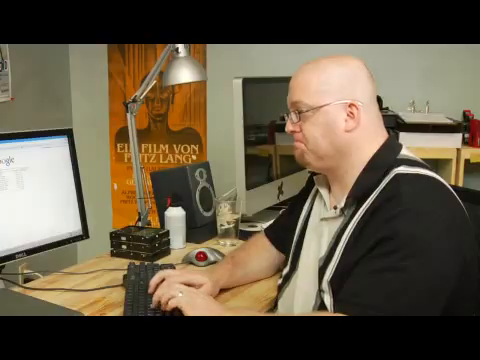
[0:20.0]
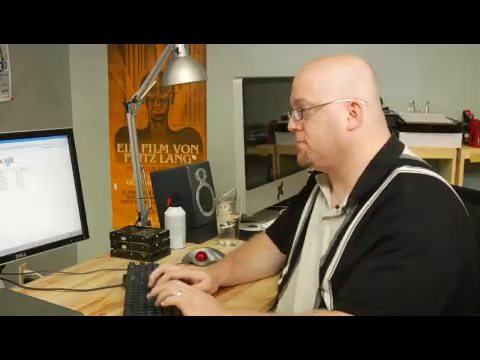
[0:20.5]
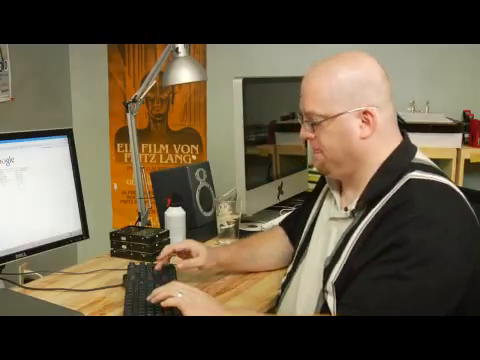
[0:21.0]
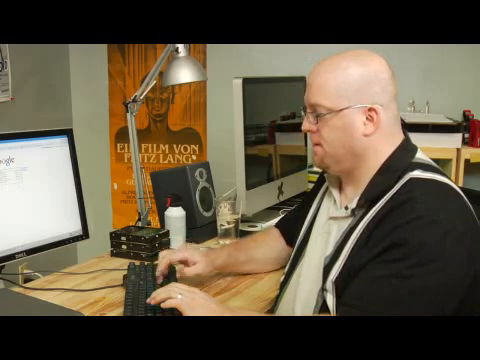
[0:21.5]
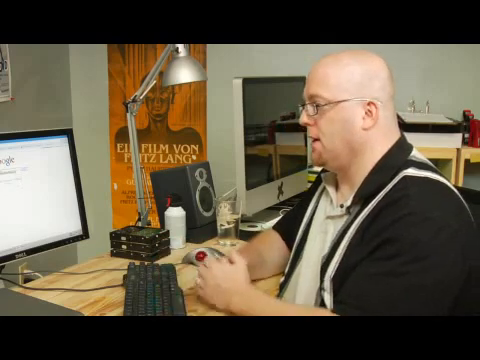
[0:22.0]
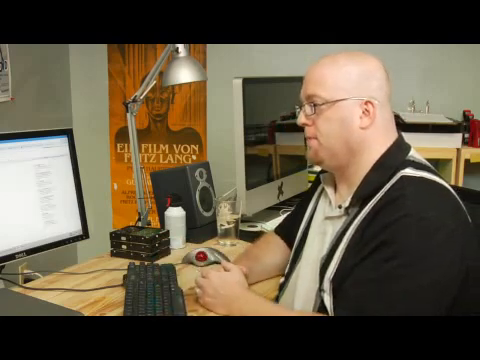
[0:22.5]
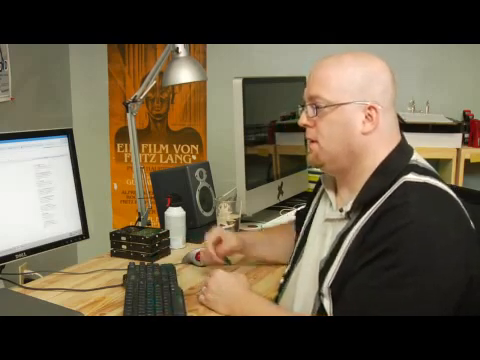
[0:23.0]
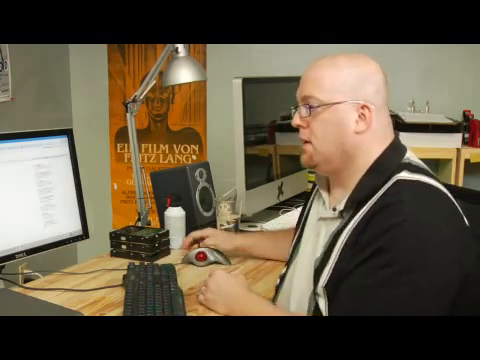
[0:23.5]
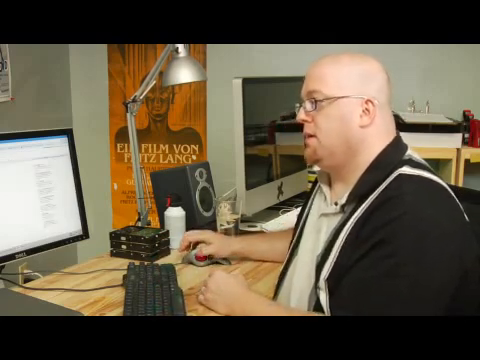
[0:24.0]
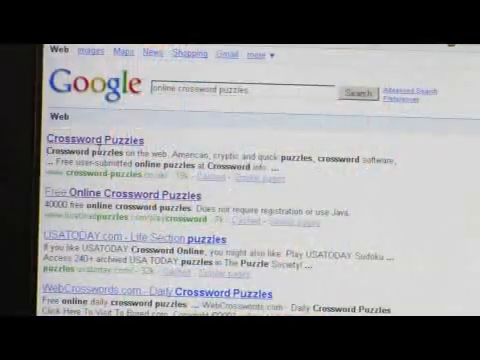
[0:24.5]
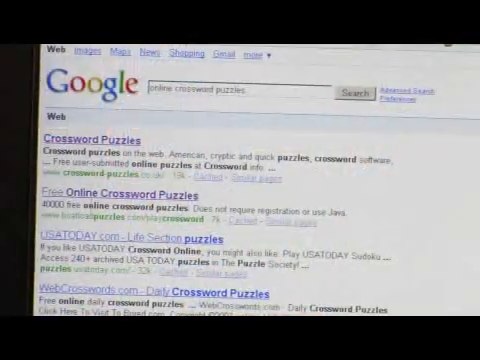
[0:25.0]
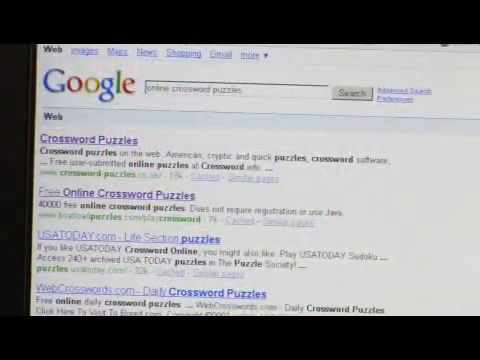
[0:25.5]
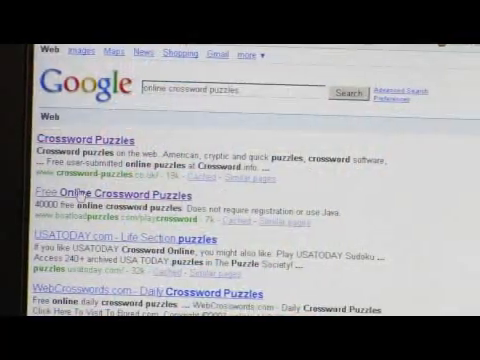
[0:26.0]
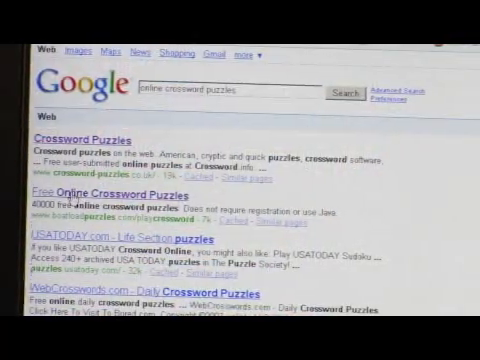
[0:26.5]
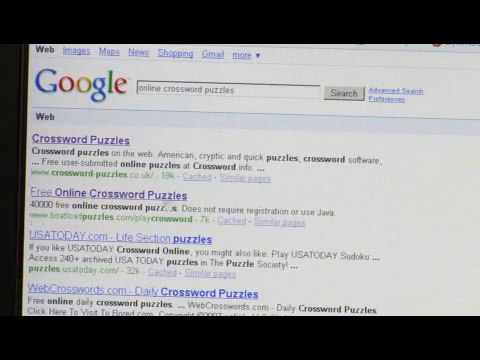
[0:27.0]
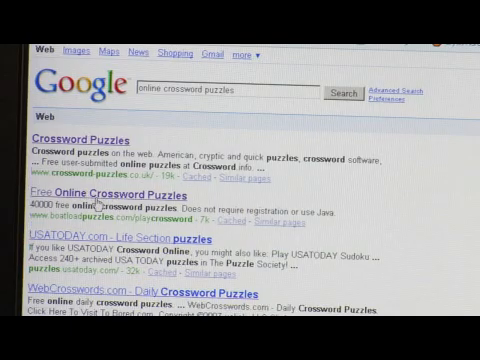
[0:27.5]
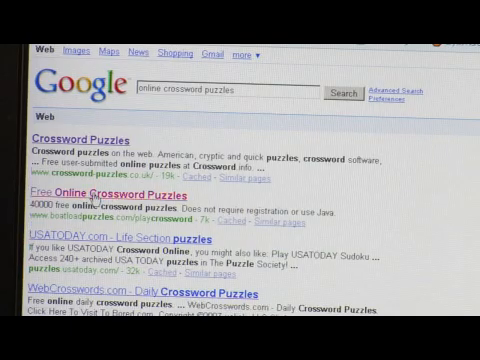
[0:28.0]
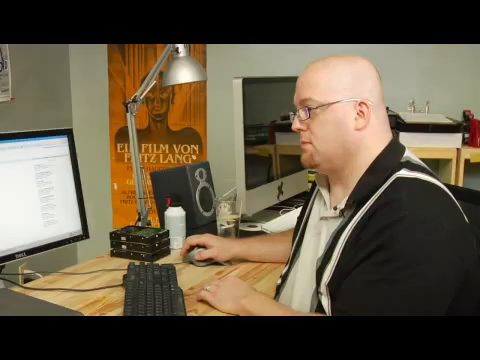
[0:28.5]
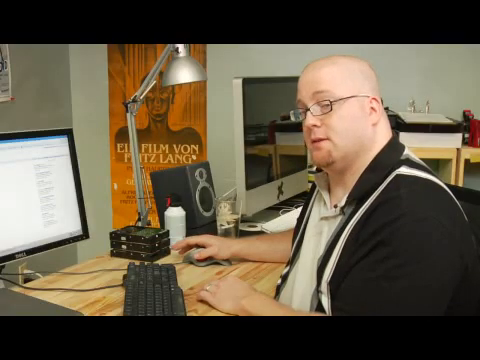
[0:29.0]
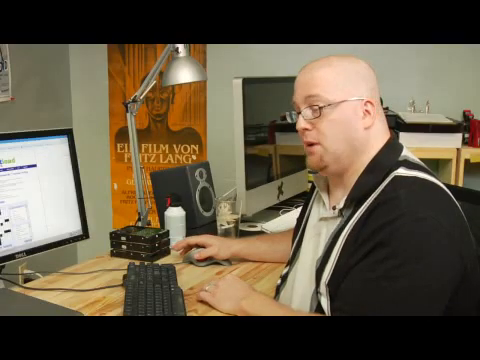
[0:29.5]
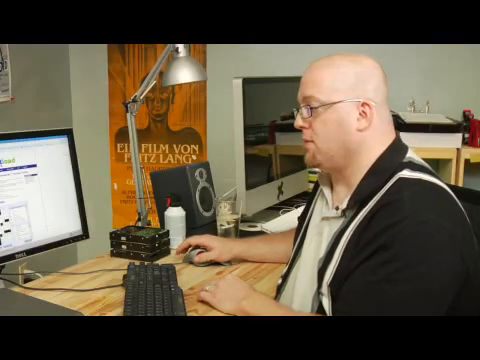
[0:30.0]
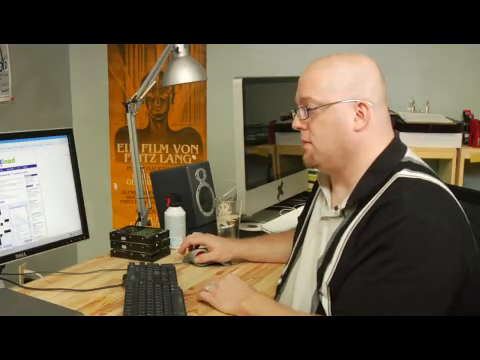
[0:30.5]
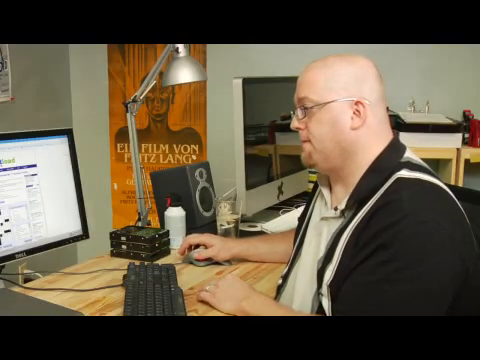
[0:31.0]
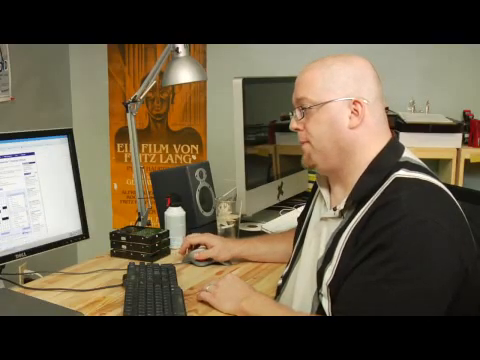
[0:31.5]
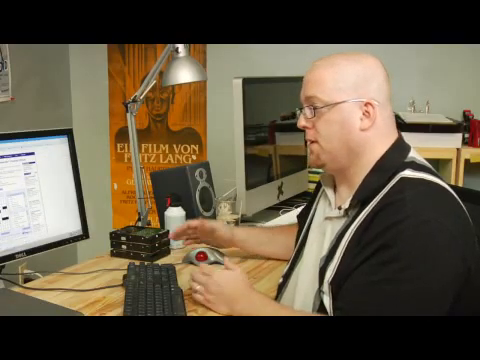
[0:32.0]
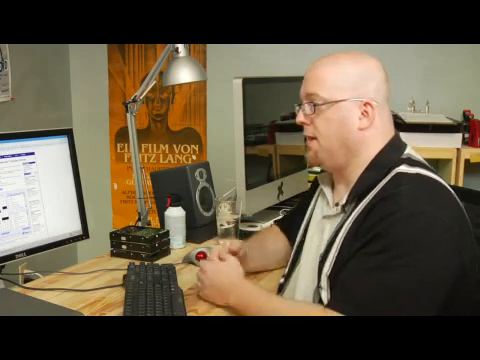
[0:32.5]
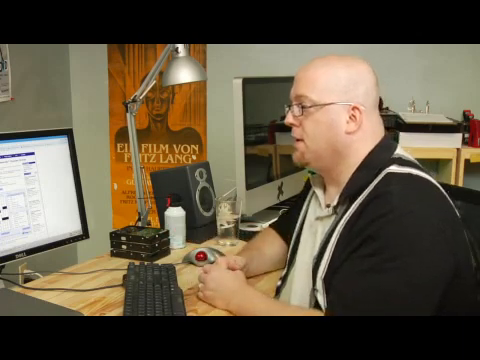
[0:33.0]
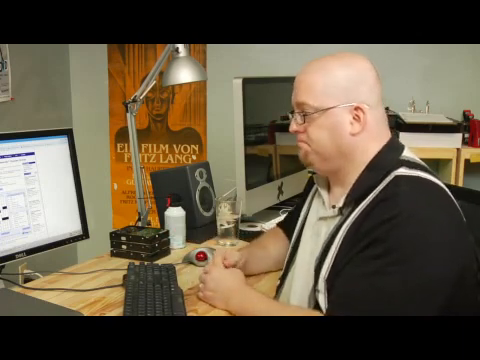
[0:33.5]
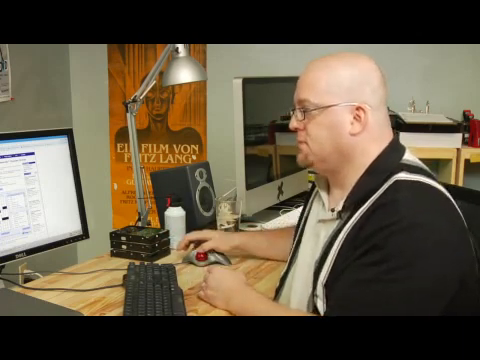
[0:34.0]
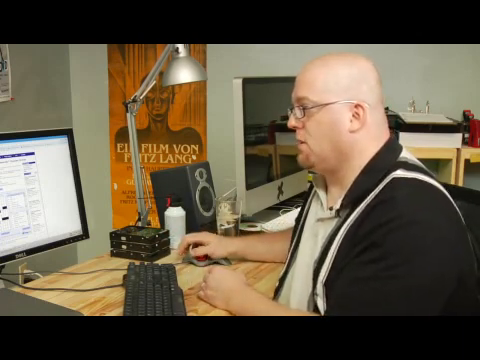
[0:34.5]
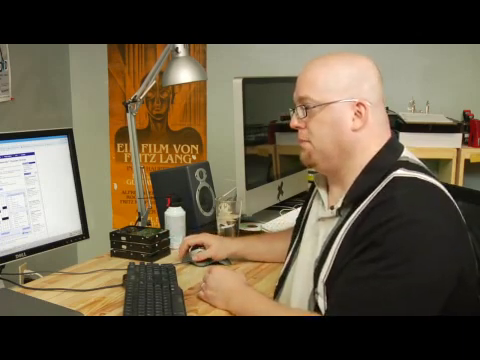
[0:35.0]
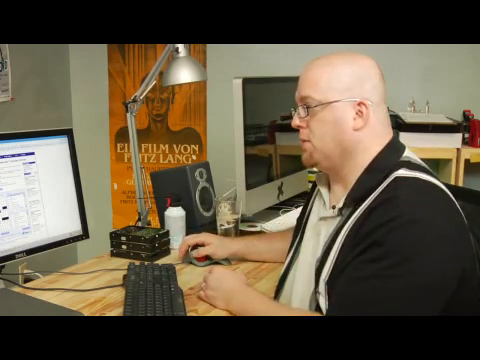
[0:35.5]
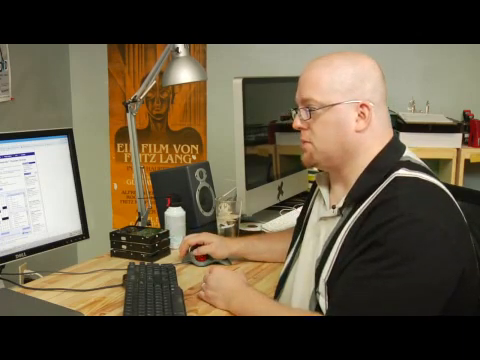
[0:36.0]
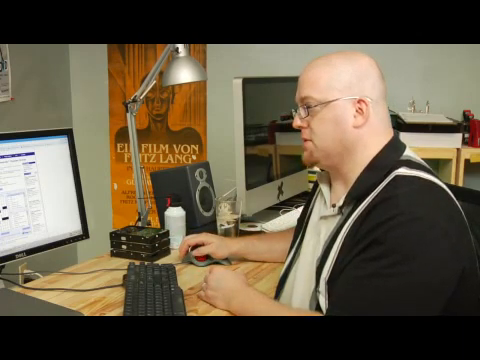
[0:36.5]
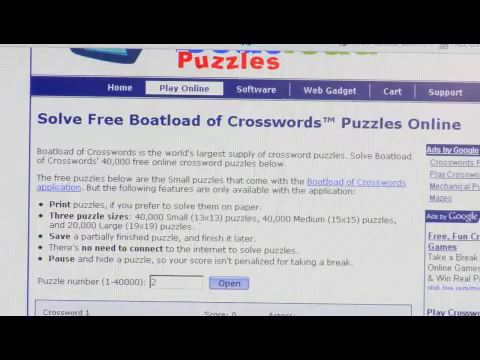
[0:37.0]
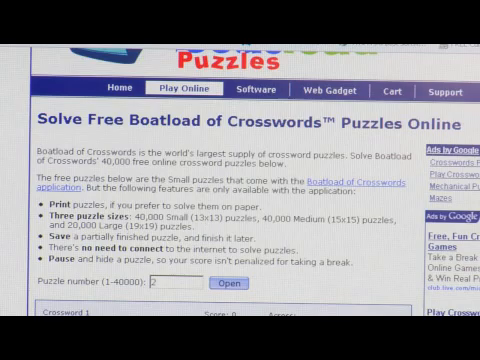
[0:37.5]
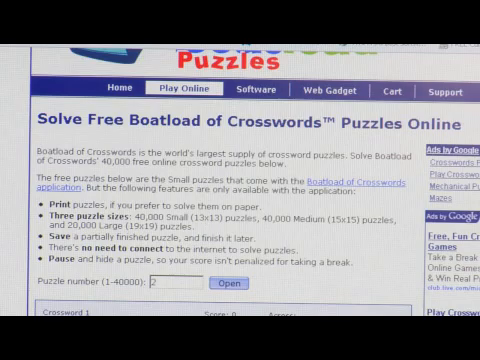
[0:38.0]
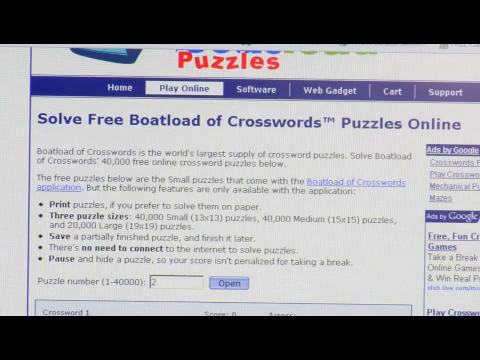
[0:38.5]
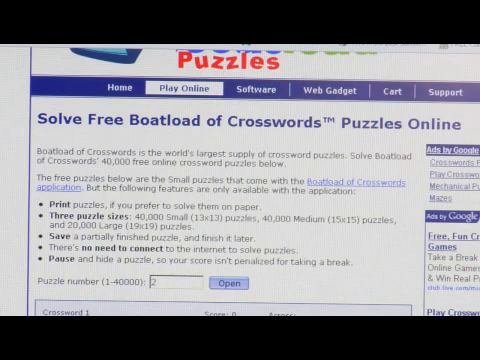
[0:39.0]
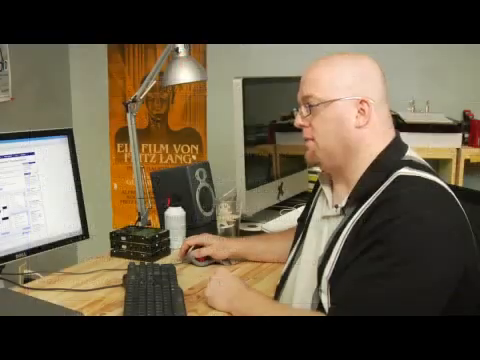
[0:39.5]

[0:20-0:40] A man types at a wooden desk. He stops typing, presses enter and looks at the Google search results for what he typed in, "online crossword puzzles". Several results appear: "crossword puzzles", then "free online crossword puzzles", "USAtoday.com life section puzzles", and "crosswebcrosswords.com daily crossword puzzles". The first two results are purple, apparently links he has visited before, while the last two visible ones are blue. Along the top are "web", "image", "maps", "news", "shopping", "Gmail" and "more", with the "more" option having an arrow. The Google logo is multicolored: the G is blue, the first O red, the second O yellow, the second G blue, the L green and the E red.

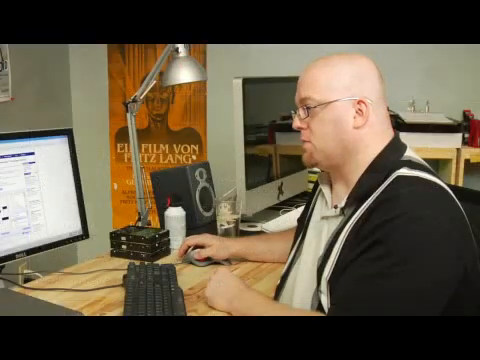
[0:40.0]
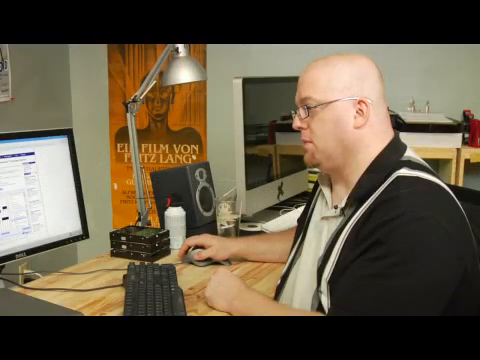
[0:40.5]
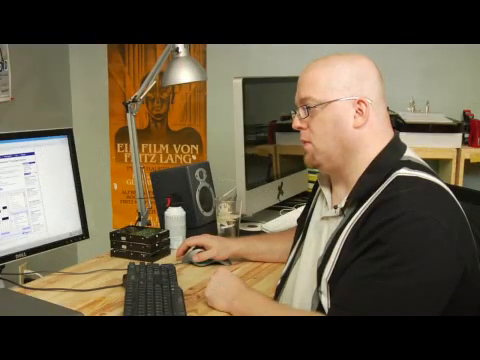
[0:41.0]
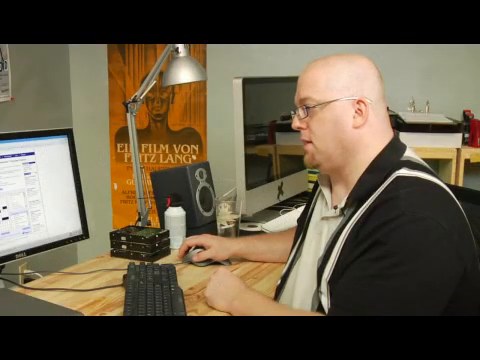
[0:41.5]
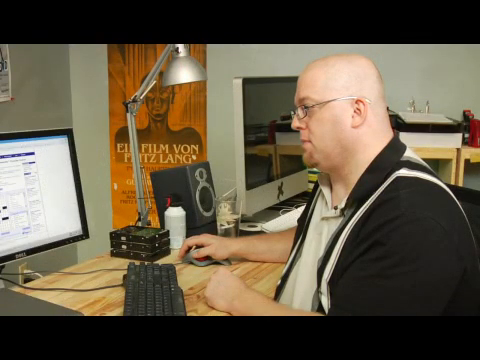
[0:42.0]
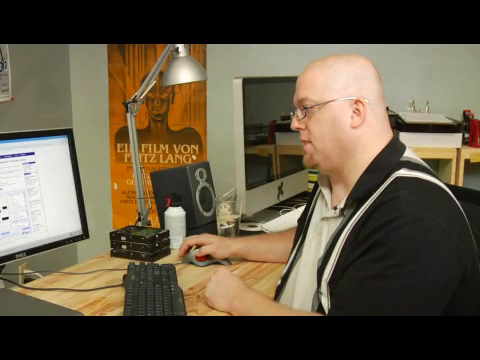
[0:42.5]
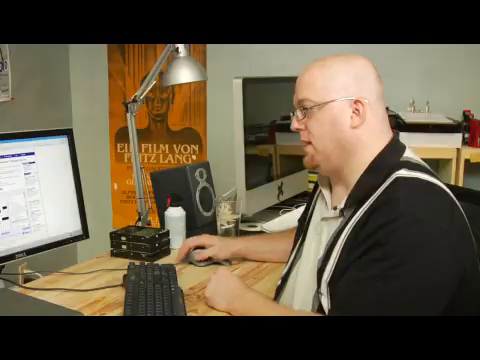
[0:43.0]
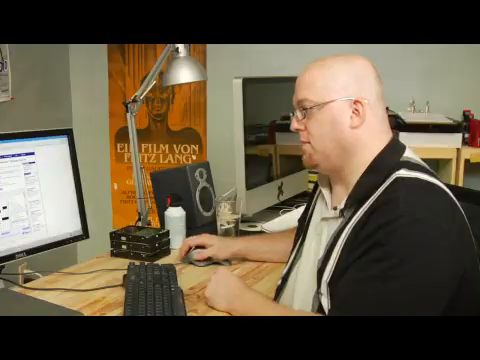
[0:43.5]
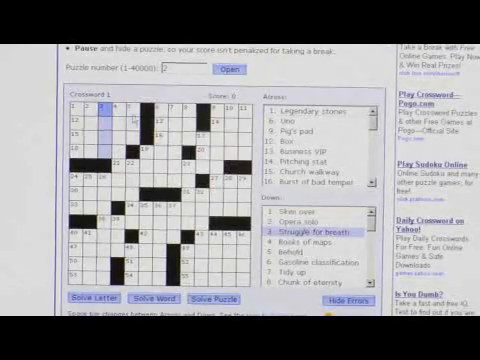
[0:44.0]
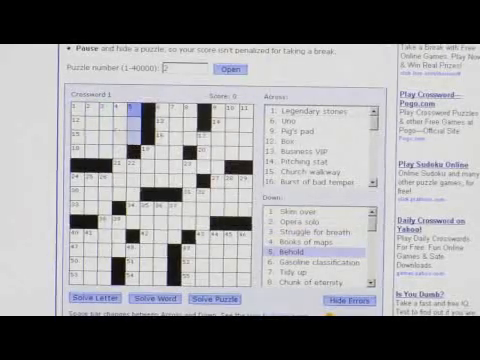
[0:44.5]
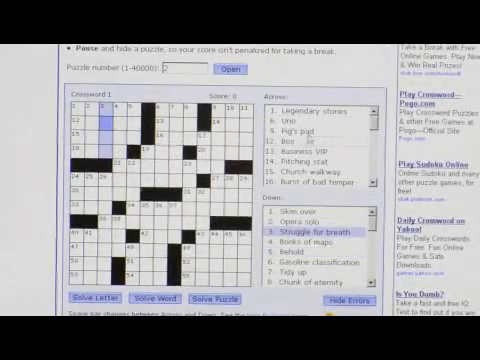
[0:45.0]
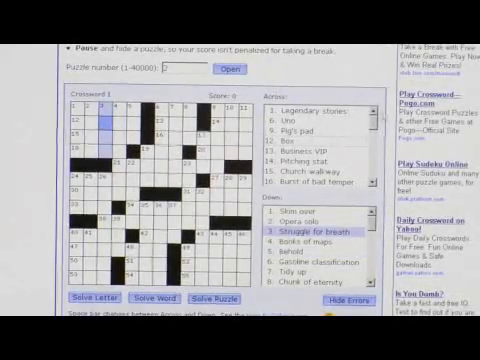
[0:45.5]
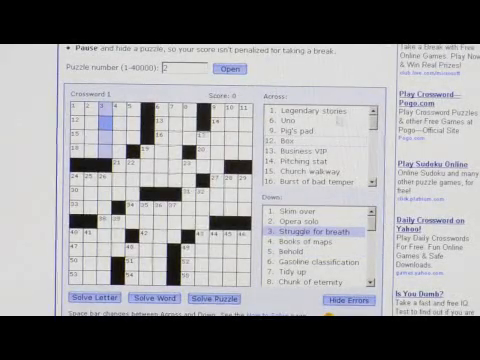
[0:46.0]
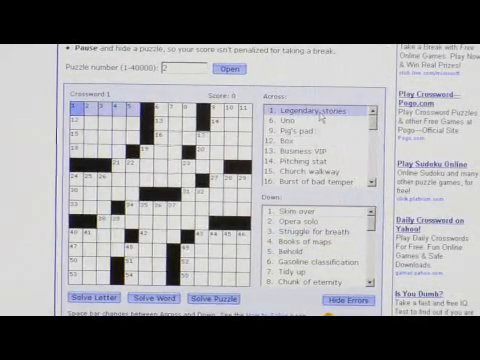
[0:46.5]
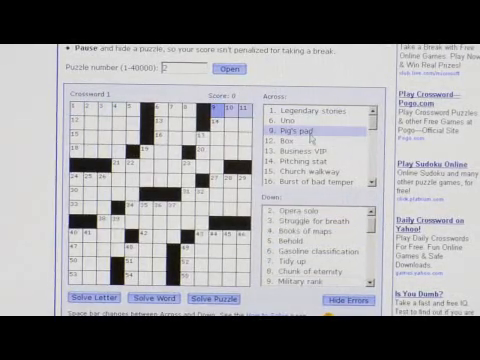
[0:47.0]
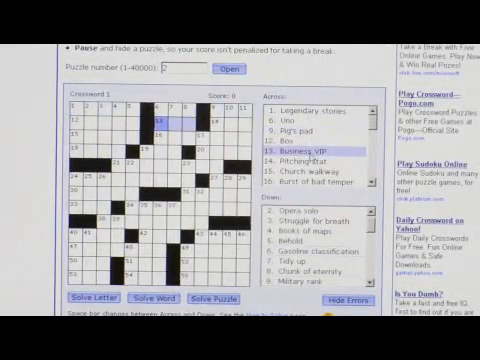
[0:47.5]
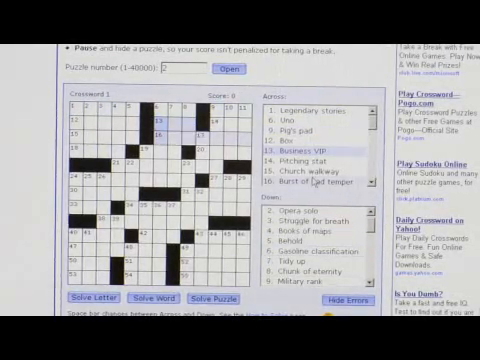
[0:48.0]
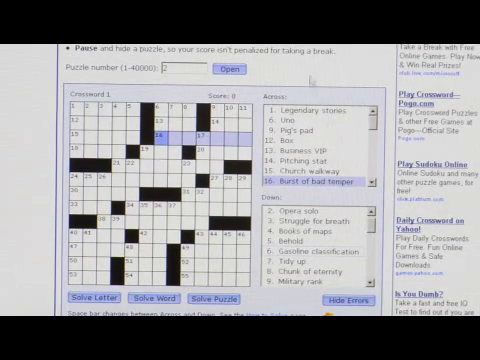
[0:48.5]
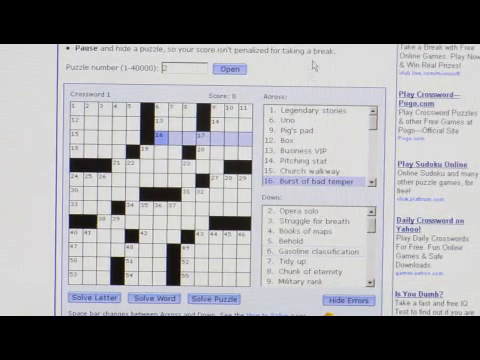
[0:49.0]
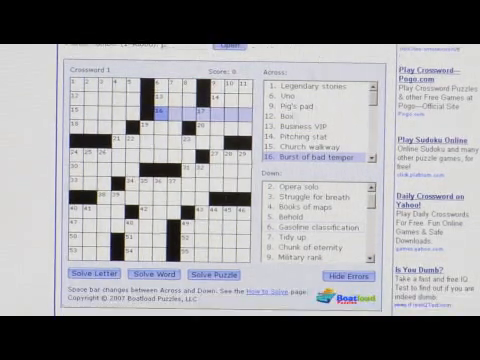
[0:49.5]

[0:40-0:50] A person is doing a crossword puzzle, and the crossword puzzle page shows many elements. At the top is a bullet reading "Pause" in bold black, followed in normal, non-black letters by "can hide a puzzle, so your score isn't penalized for taking a break." Below that is "puzzle numbers" with "1-40000" in quotation marks. To the right is an input box with the number 2 entered, and to its right a blue button reading "open" in black letters. Further right is text reading "Take a break with free online games, play now and win real prizes." Below that there seems to be a blue link too small to make out. Below it is another blue link reading "Play crosswords pogo.com" with "Play crossword puzzles and other free games at Pogo's official site." Below that is a link reading "Play sudoku online", and beneath it, in black, "Online sudoku and many other pogo games for free!"